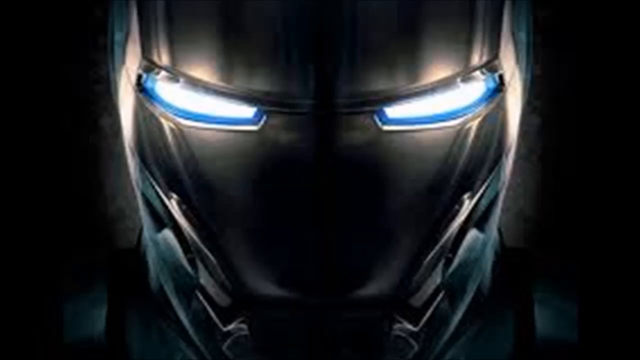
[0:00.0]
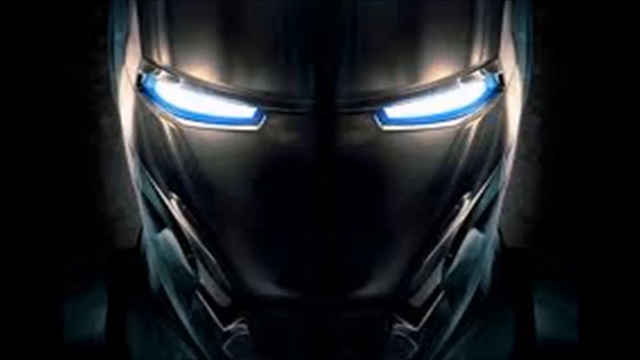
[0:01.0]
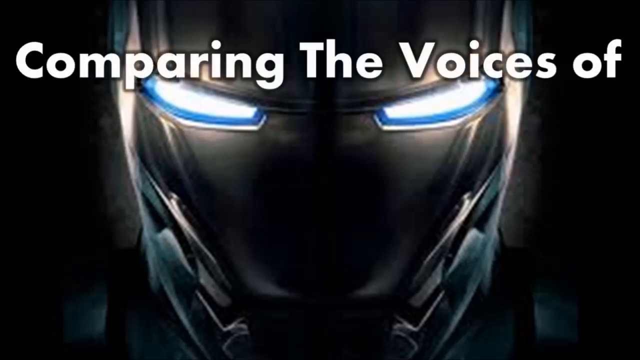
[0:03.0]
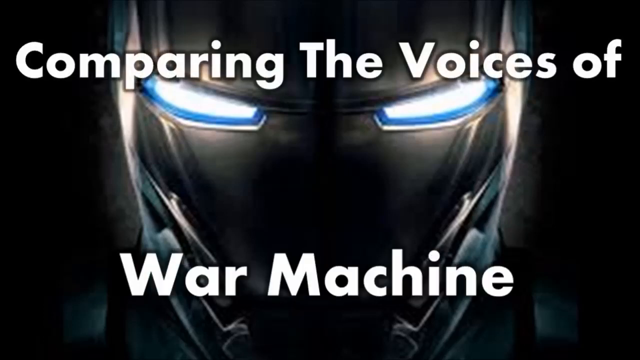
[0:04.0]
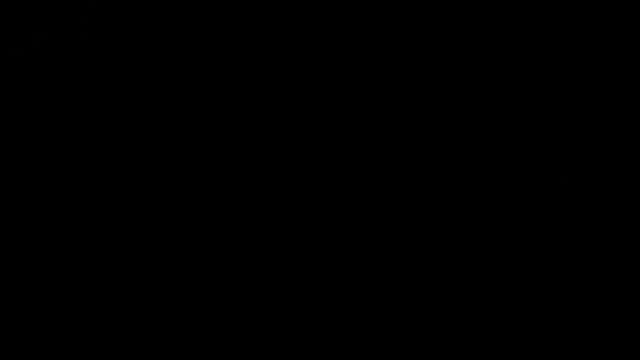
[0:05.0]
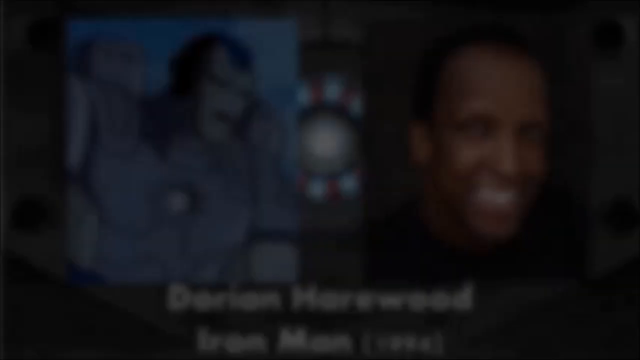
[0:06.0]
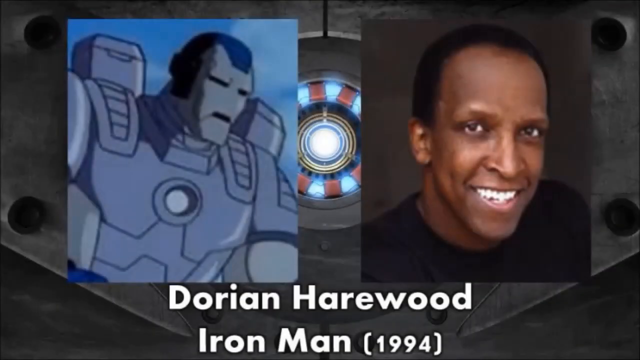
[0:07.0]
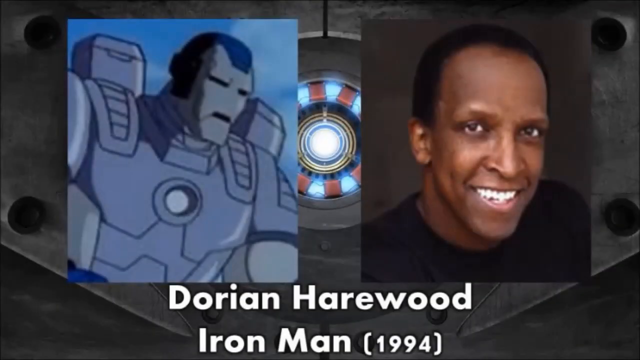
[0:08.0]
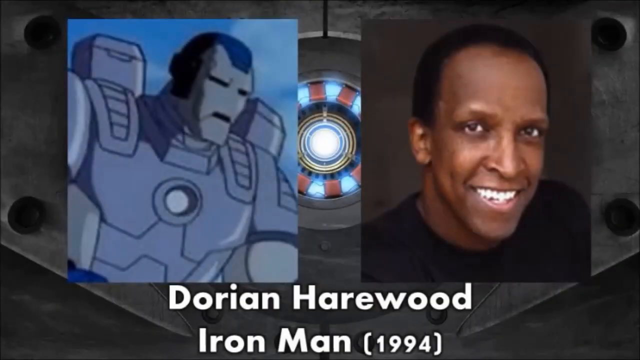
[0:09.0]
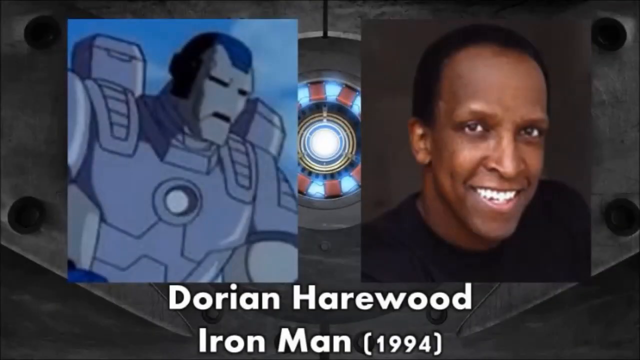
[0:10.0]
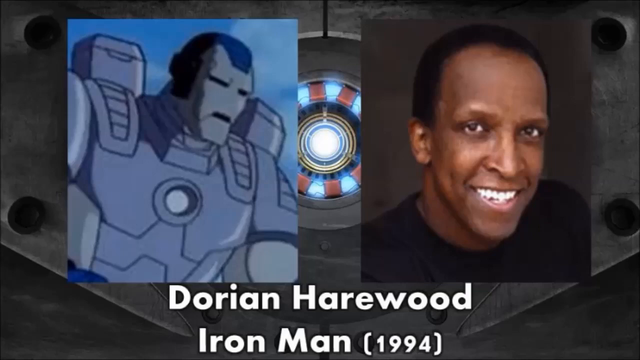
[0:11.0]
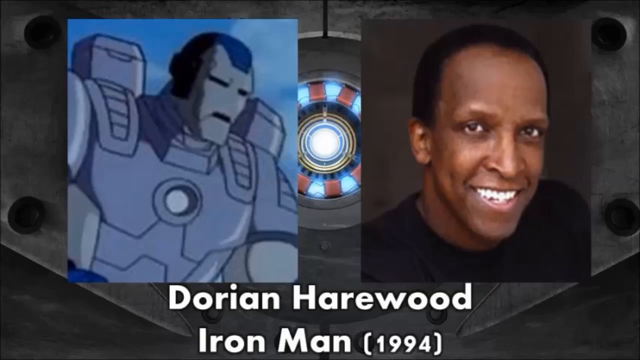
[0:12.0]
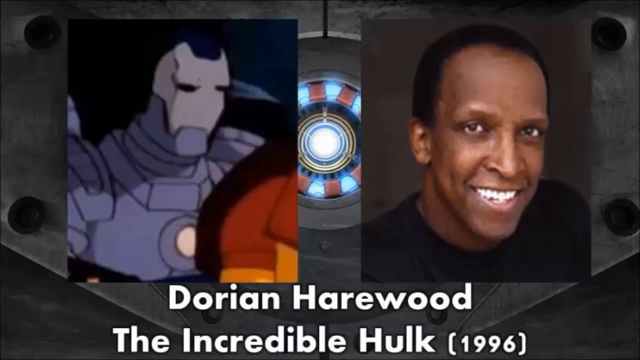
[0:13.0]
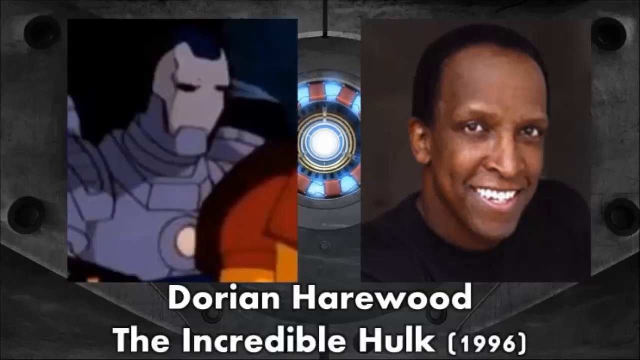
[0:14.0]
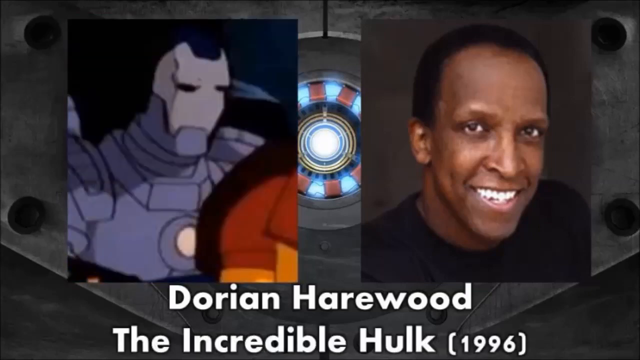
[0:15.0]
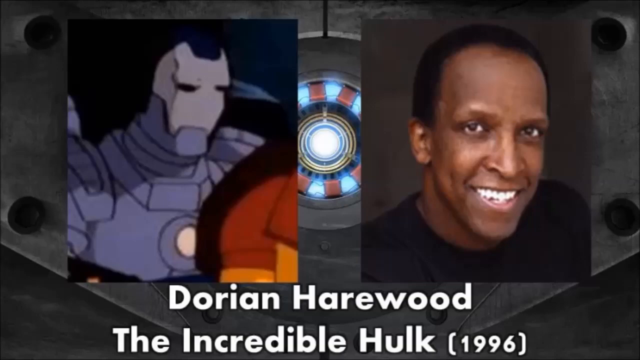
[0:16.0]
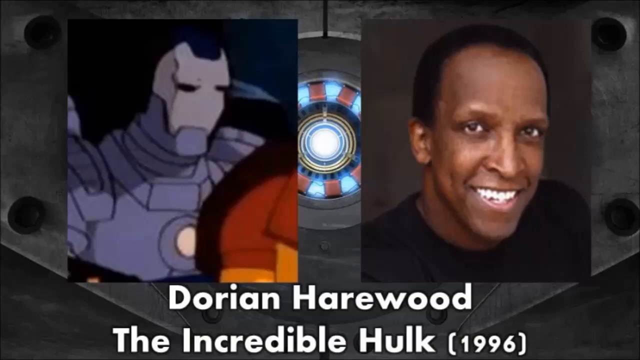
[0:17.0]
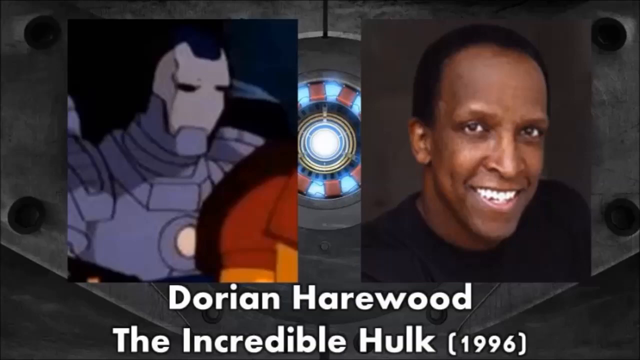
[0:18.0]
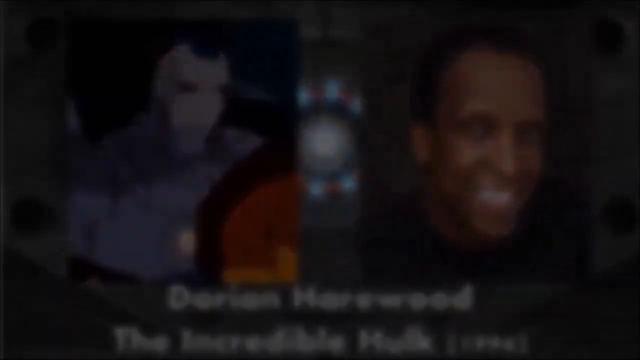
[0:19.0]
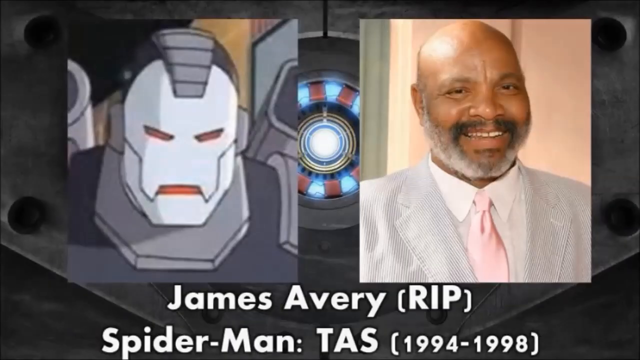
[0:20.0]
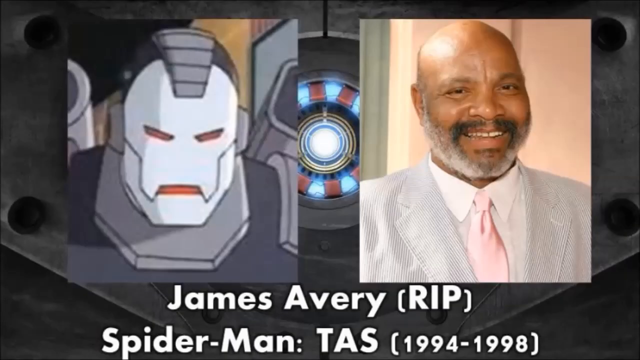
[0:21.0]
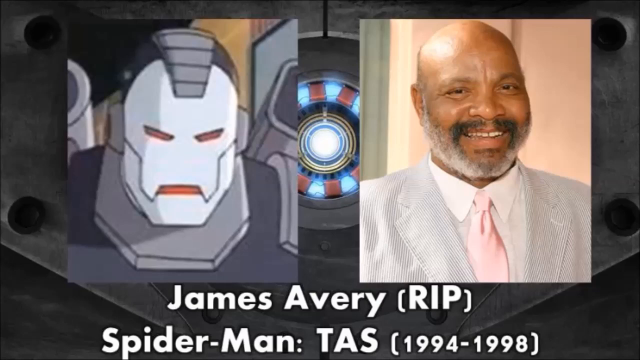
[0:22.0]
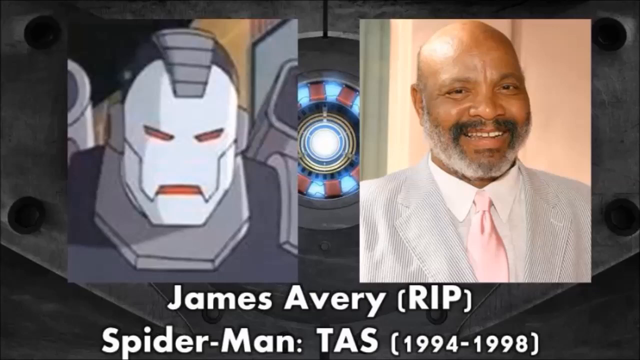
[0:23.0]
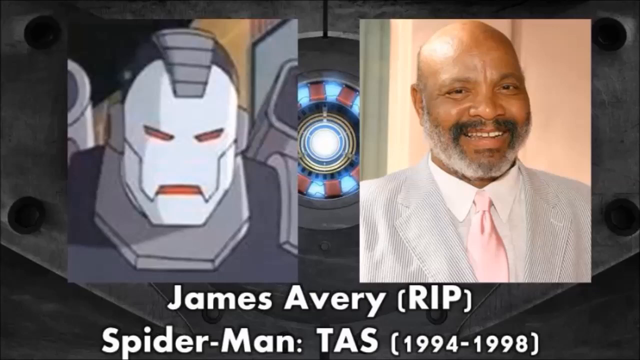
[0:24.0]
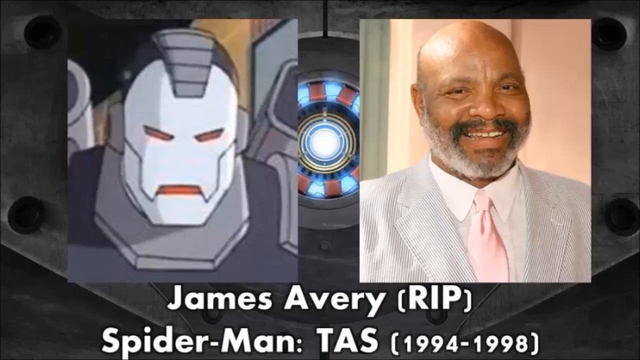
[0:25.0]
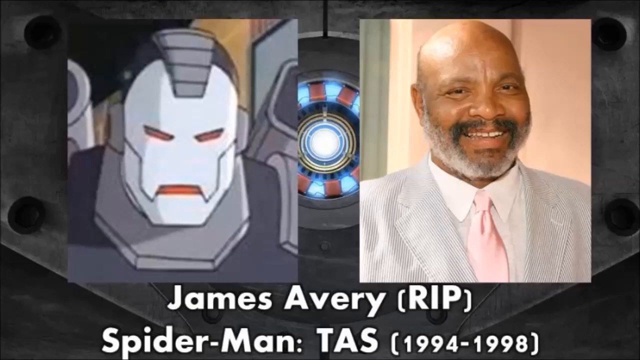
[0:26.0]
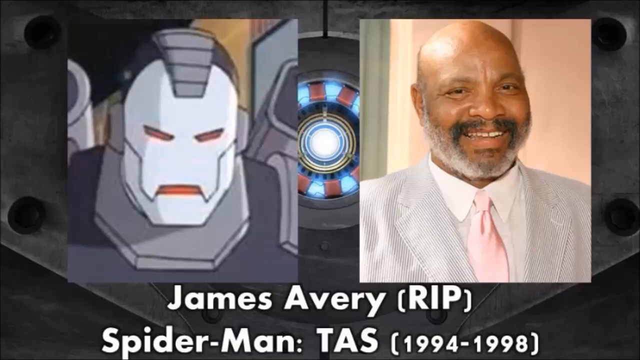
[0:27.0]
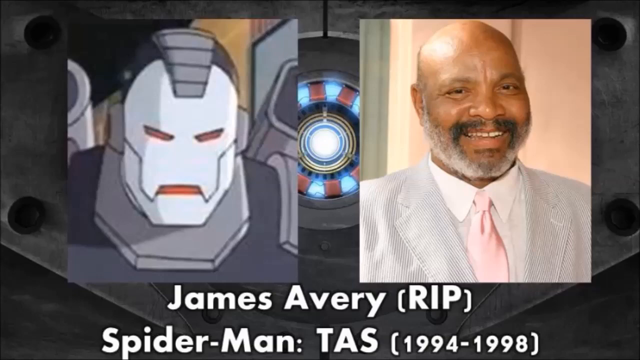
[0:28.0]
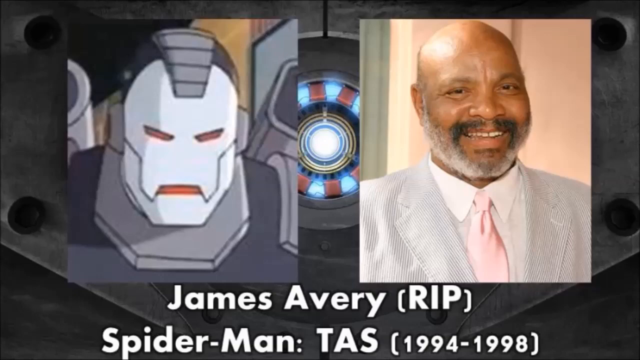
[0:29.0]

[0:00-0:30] The video opens with white title text on the screen reading "comparing the voices of war machine." A close-up shows Iron Man's mask, which is on, with its eyes glowing blue; only the mask and part of his shoulders are visible against what looks like a black background. The video cuts to a black screen, then to a blurred image that clears up to show the first Iron Man, Dorian Haywood, a black male, with his character, a cartoon animation of Iron Man, on the left-hand side. Another image of the man's character as Iron Man appears, with the glowing thing that comes from Iron Man's chest in the background. Another individual then comes up with "r.i.p" and Spider-Man T.A.S. from 1994 to 1998; he is a chubby, bald man with gray hair, shown in a picture on the right-hand side of the screen, with a cartoon illustration of his character on the left-hand side.